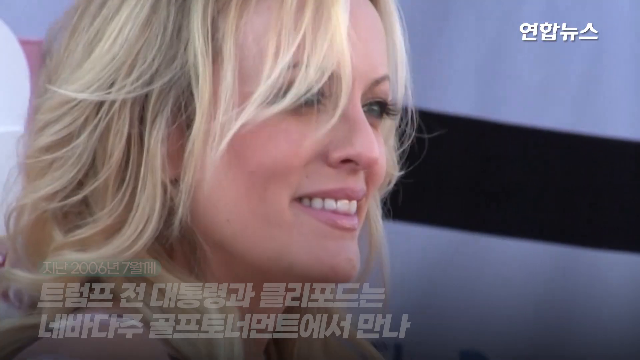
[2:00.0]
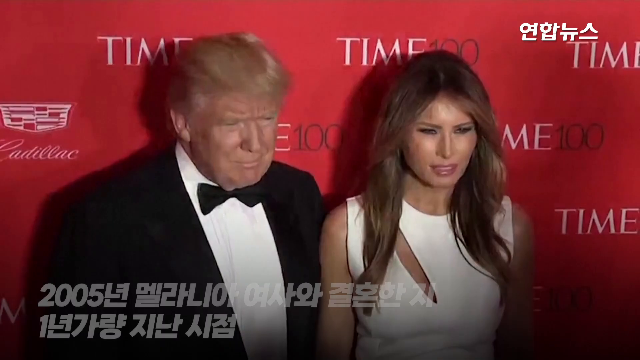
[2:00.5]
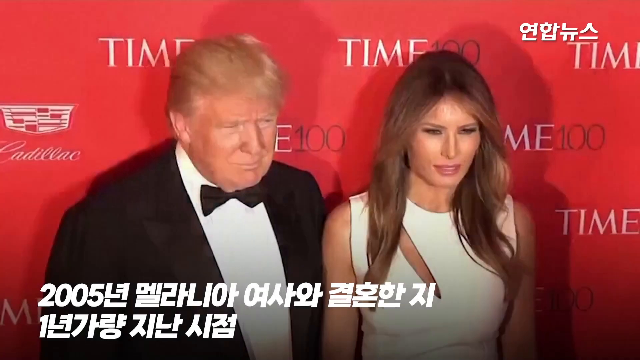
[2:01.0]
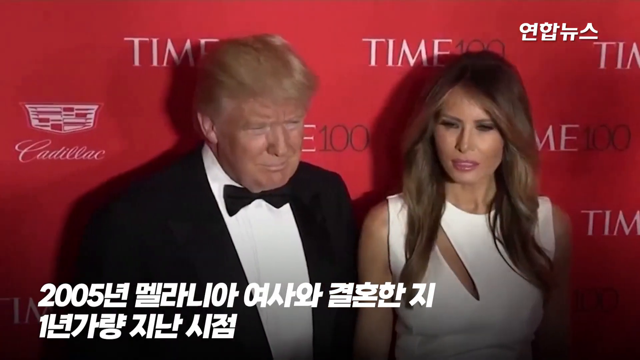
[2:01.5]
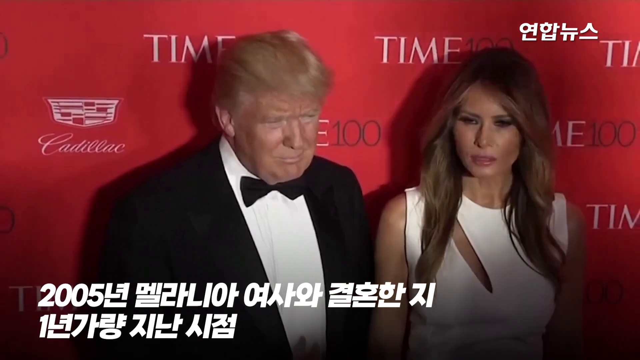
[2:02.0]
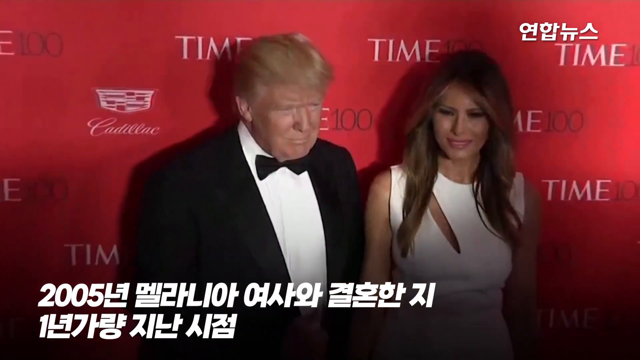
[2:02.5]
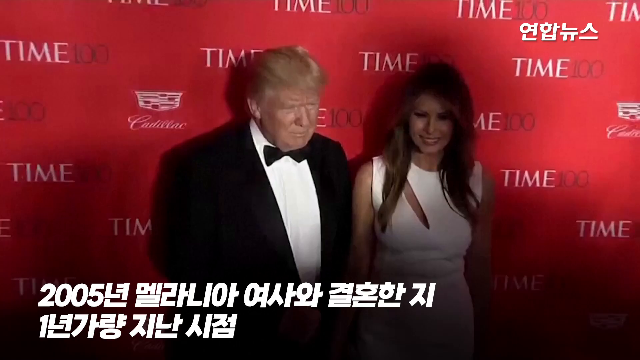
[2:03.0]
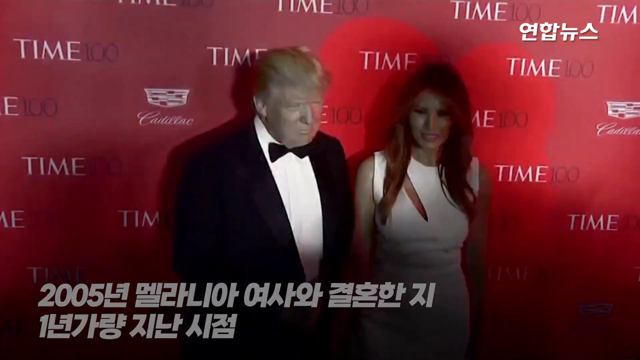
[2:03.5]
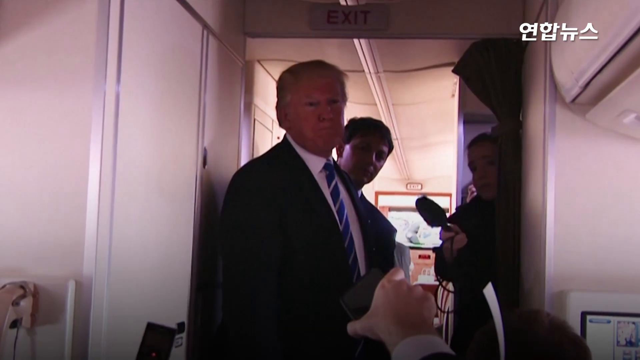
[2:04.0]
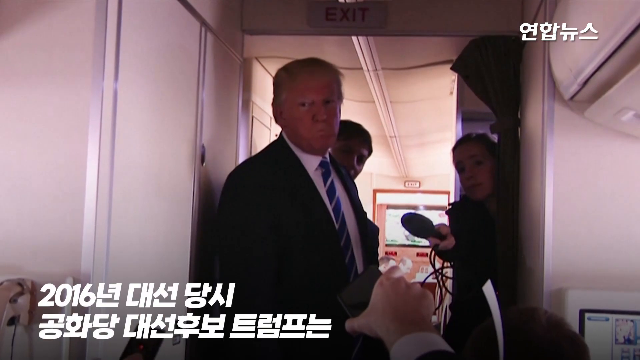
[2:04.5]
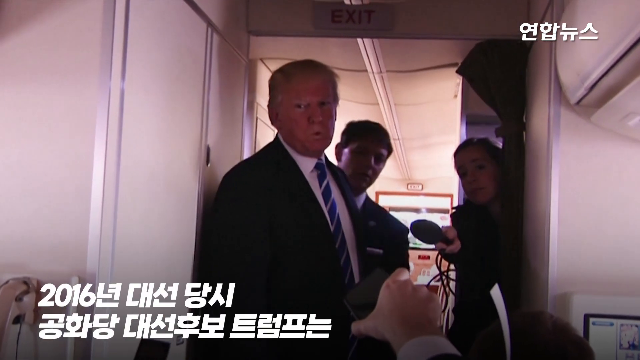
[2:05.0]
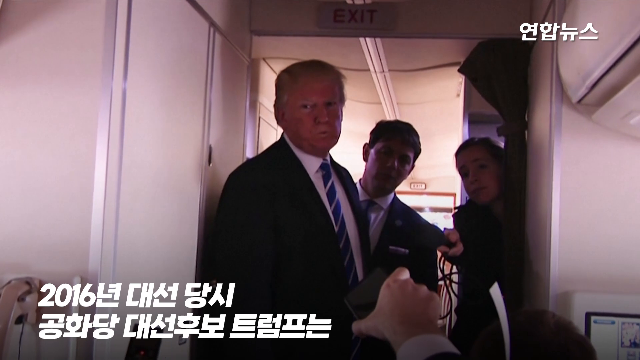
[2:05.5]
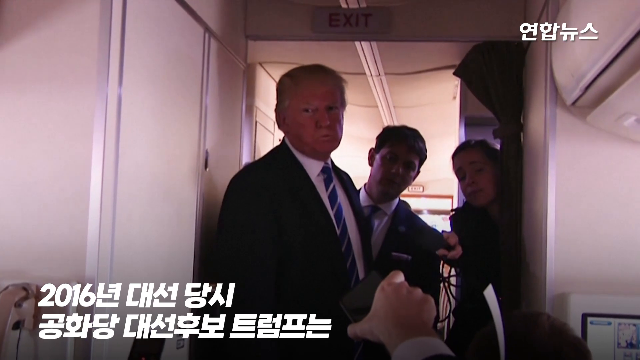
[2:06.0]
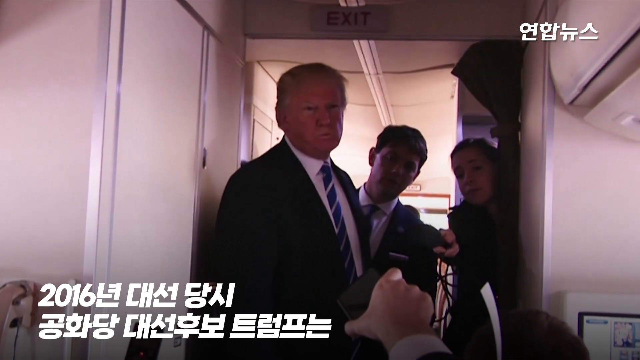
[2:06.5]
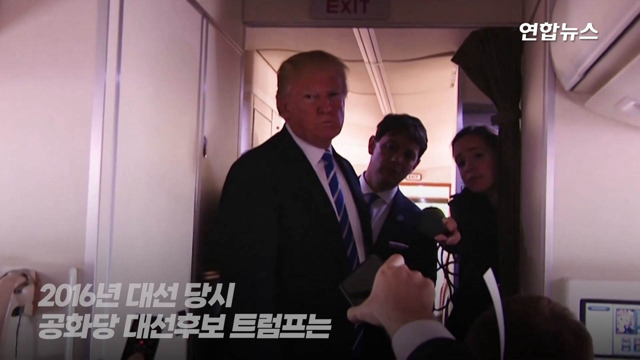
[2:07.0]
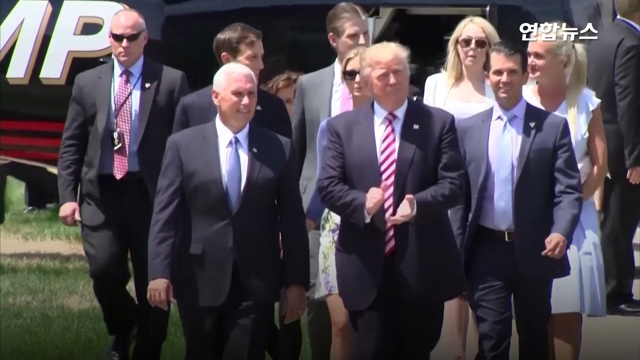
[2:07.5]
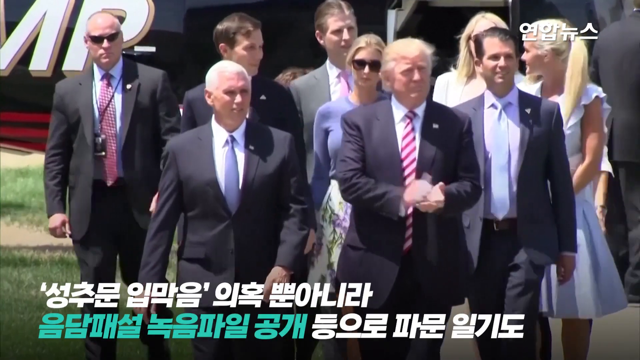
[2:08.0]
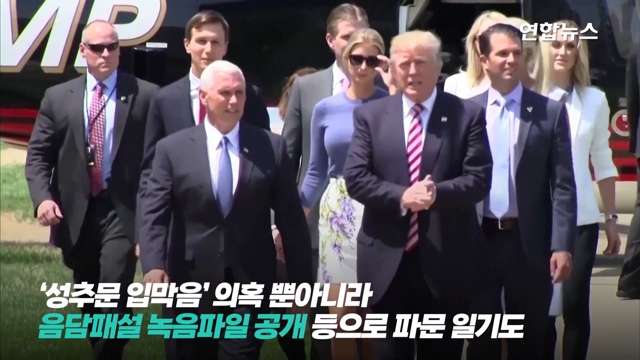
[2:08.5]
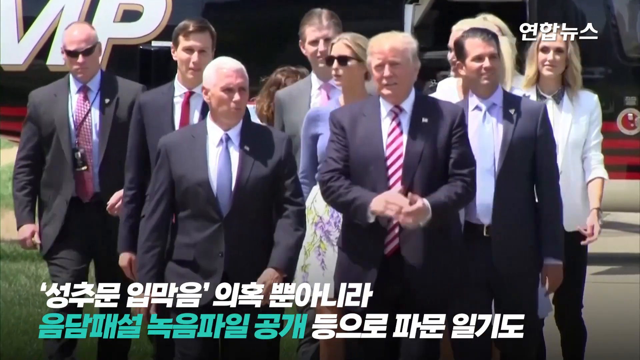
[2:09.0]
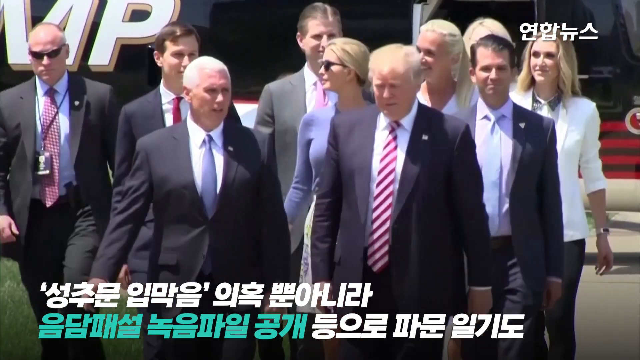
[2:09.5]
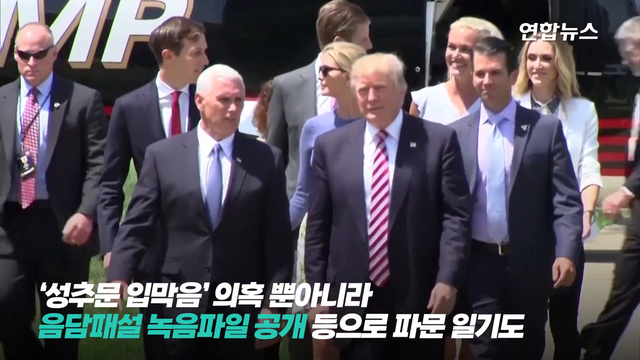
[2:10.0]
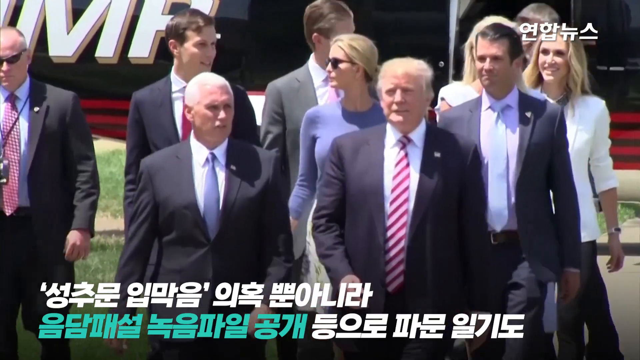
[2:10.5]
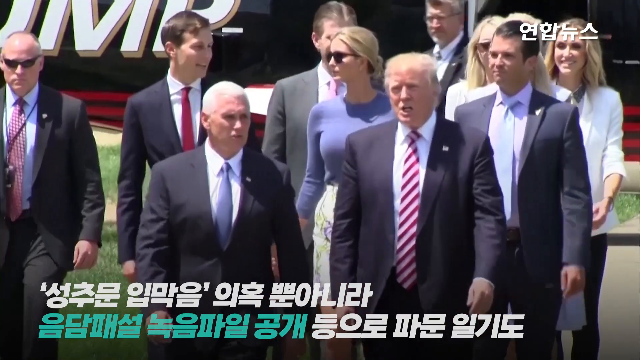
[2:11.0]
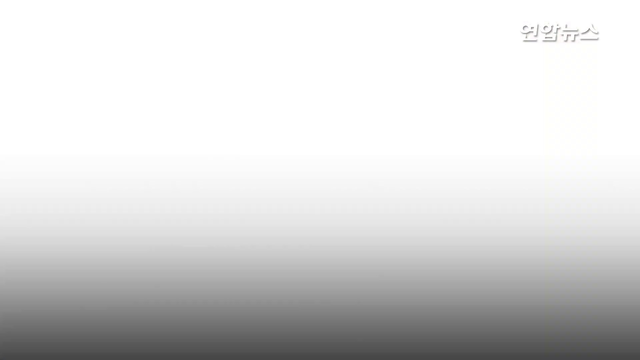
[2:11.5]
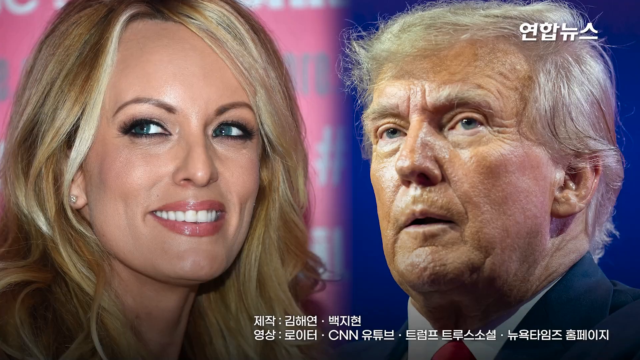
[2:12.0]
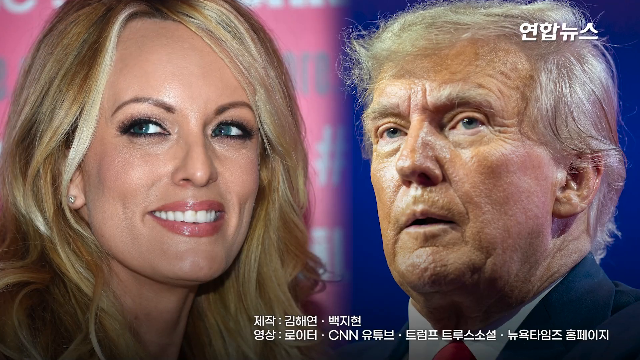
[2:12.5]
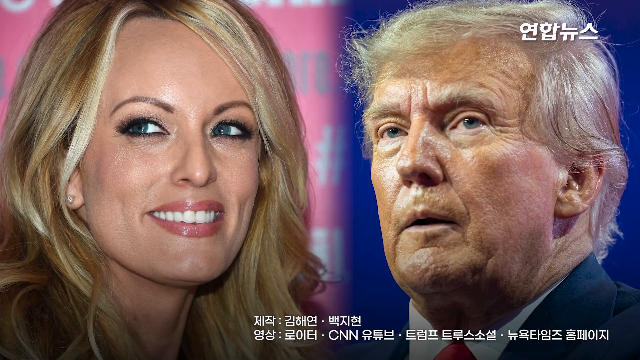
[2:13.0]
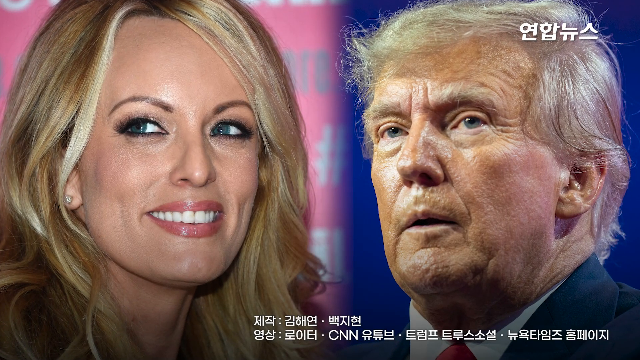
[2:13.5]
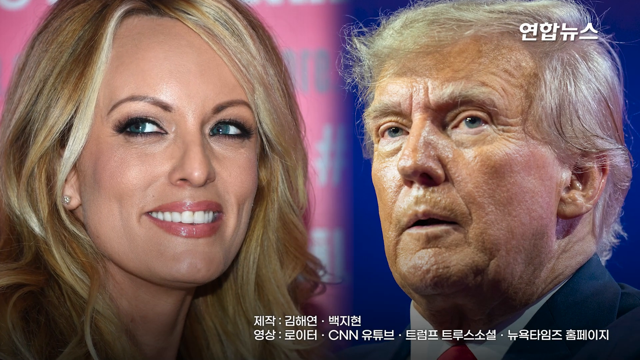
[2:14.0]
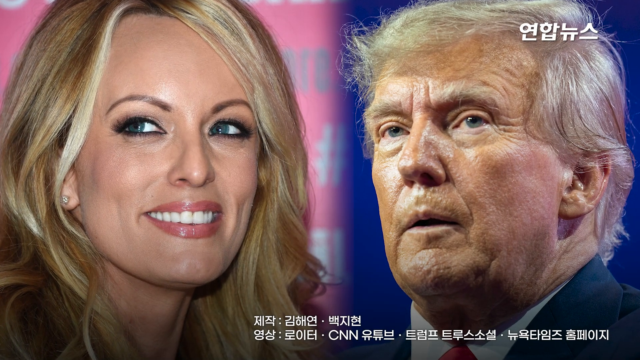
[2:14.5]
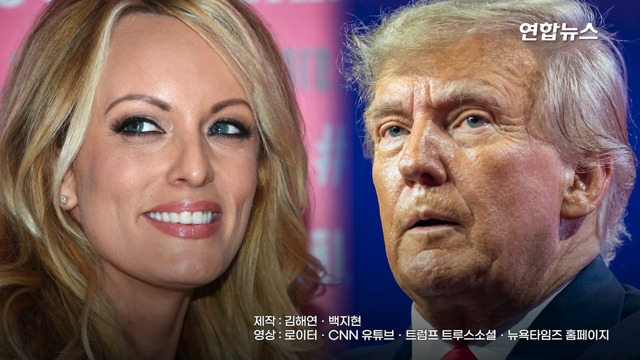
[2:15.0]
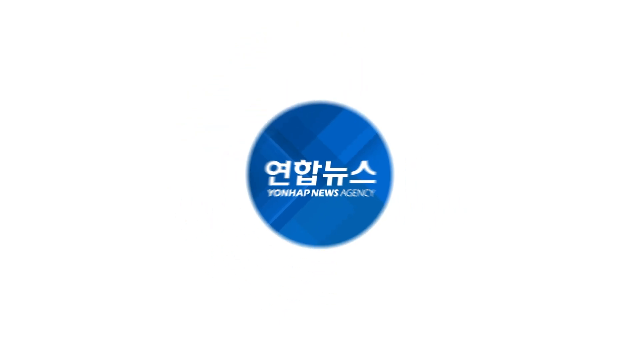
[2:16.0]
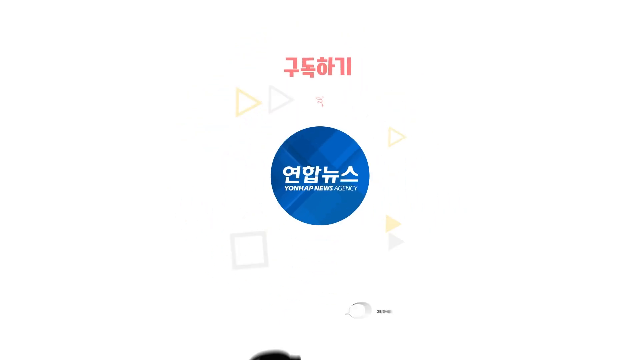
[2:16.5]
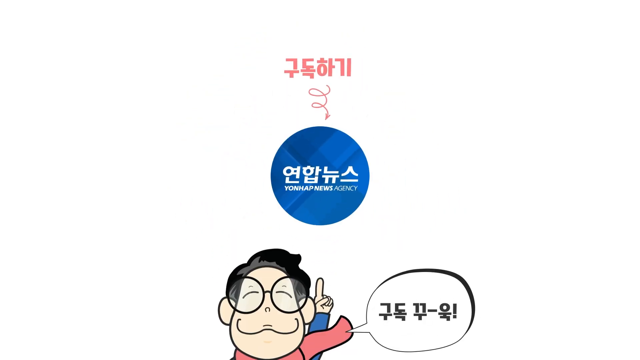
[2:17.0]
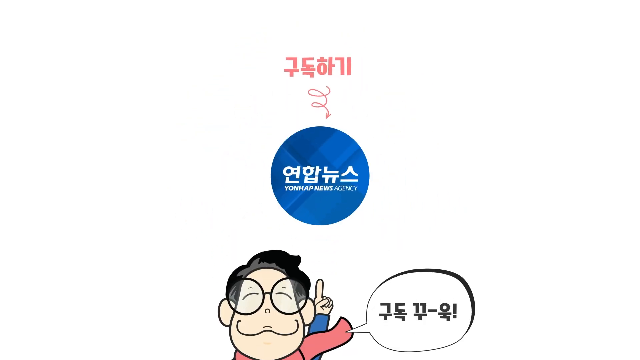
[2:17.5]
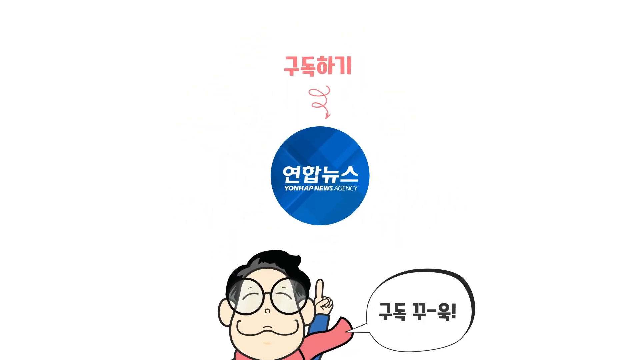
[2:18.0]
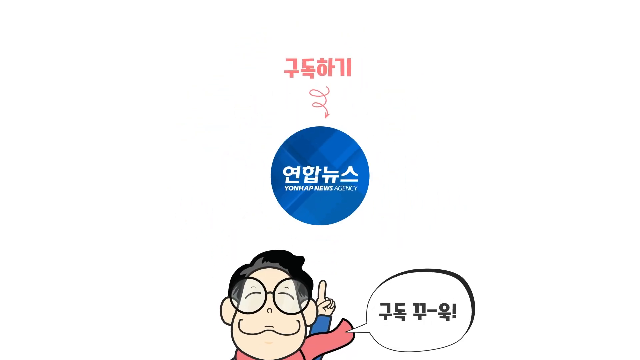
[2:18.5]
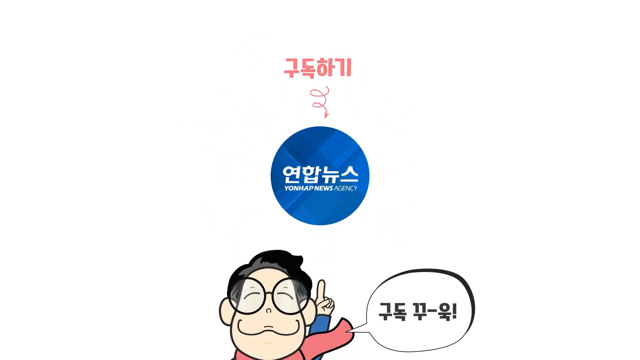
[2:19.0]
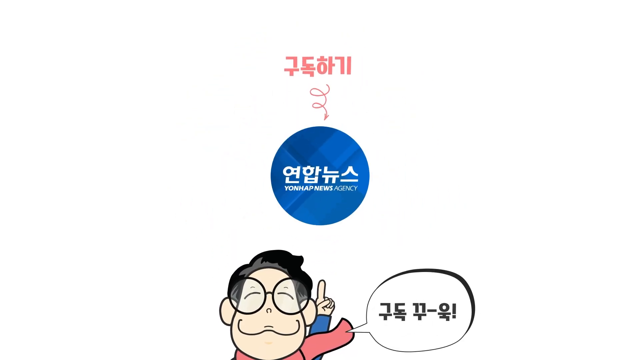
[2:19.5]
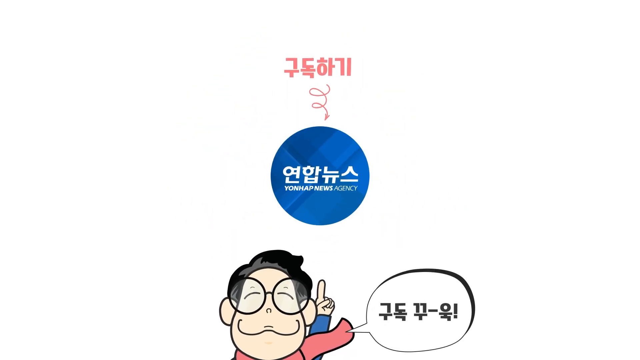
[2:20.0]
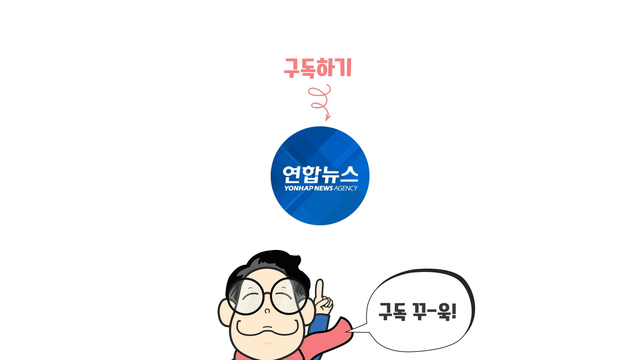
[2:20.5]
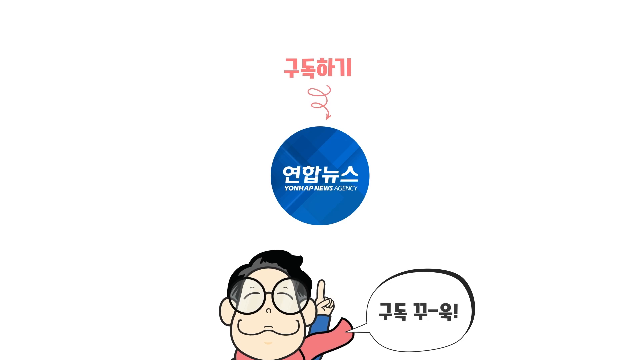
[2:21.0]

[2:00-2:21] Donald J. Trump and Melania Trump appear at what looks like an awards ceremony. Donald Trump is then shown on board Air Force One, apparently with Hogan Gidley in the background. A video shows Donald Trump with his then Vice President Mike Pence; in the background are Donald Trump Jr., Ivanka Trump and Jared Kushner, with Eric Trump behind them. Over to the right are two blonde women, one possibly Donald Trump Jr.'s ex-wife Vanessa and the other possibly Tiffany Trump. In the next scene, Stormy Daniels is on the left side and Donald J. Trump is on the right side. The broadcast is apparently from Chinese or possibly Japanese media.